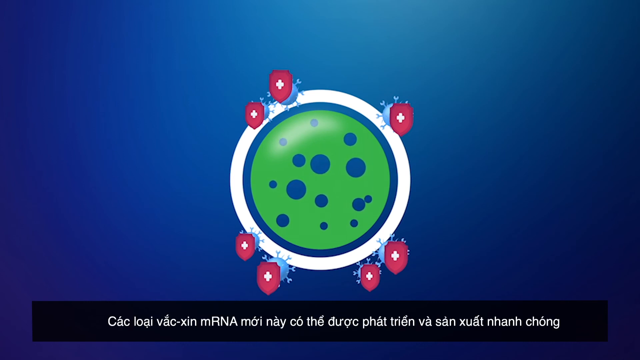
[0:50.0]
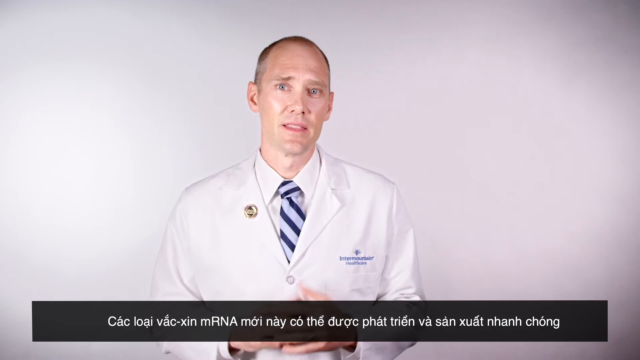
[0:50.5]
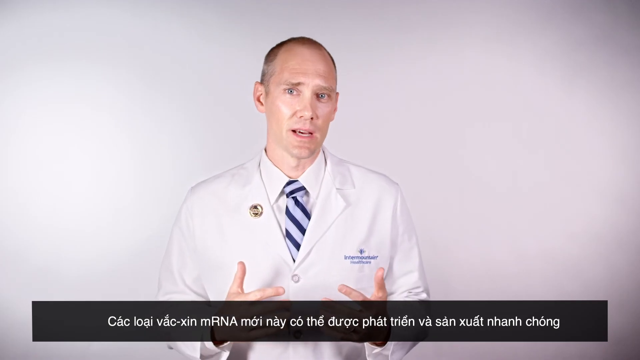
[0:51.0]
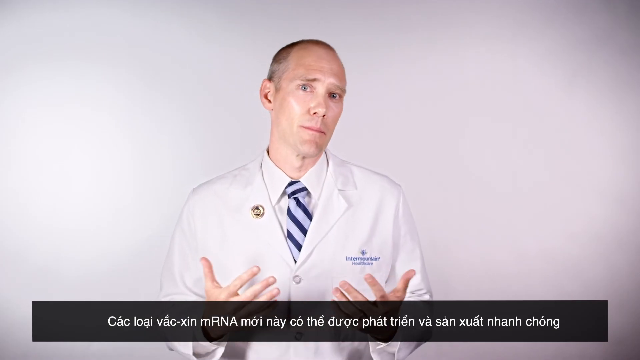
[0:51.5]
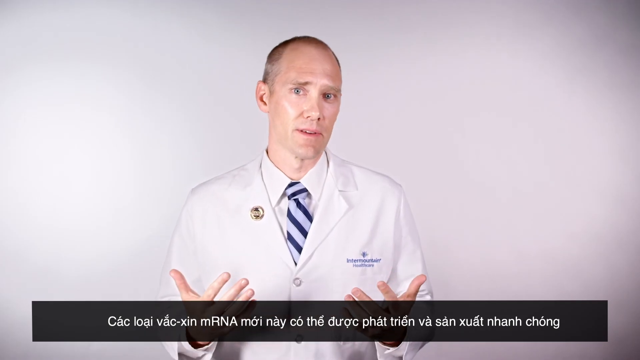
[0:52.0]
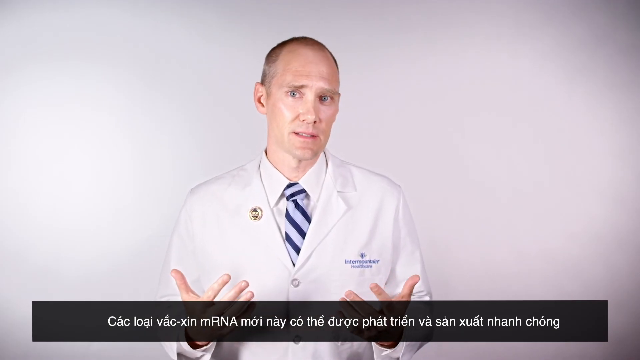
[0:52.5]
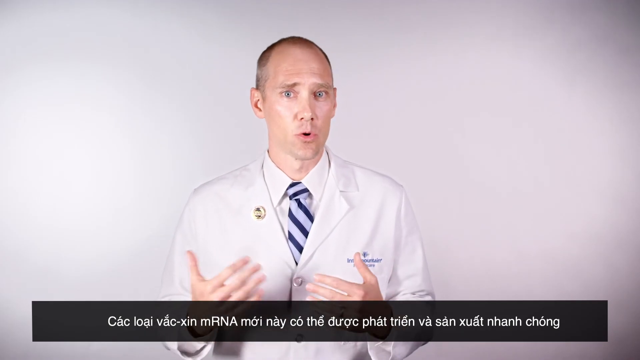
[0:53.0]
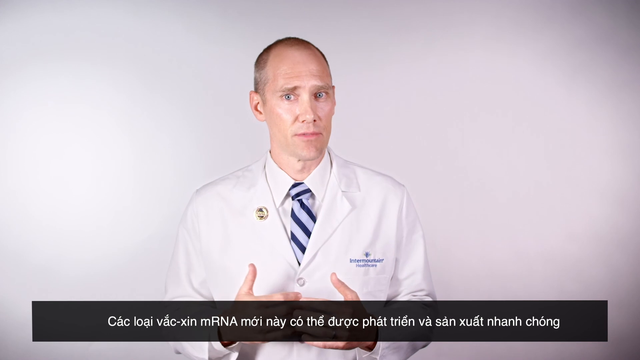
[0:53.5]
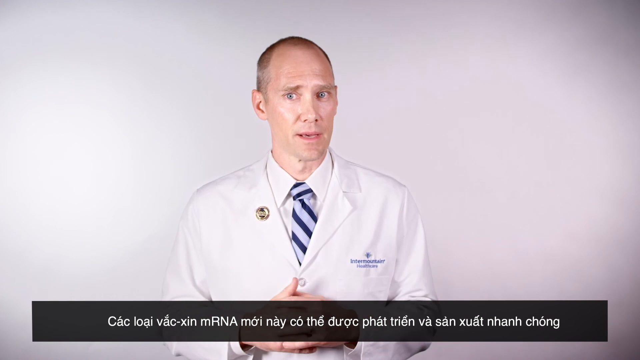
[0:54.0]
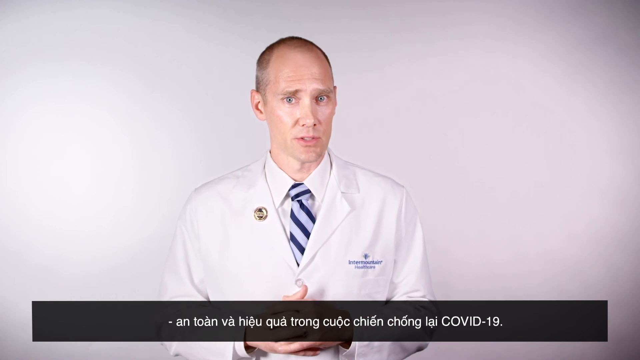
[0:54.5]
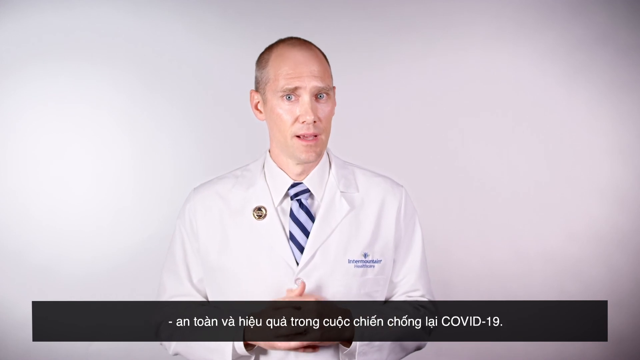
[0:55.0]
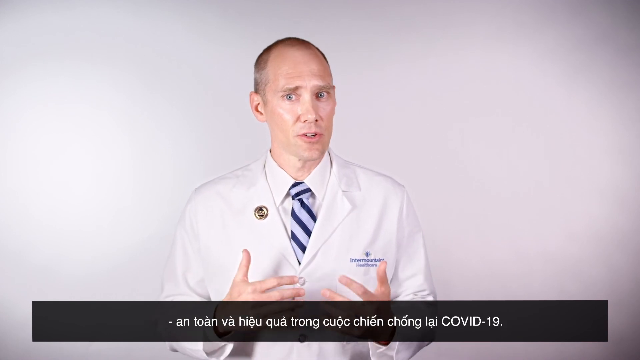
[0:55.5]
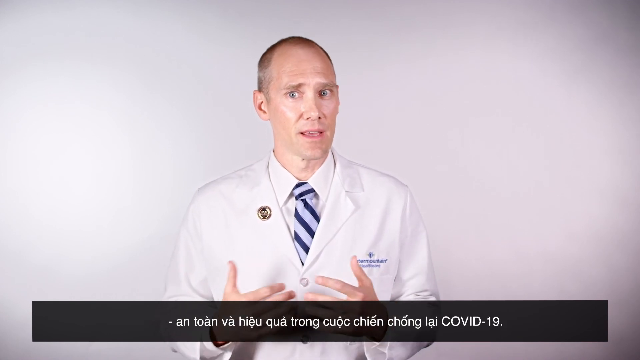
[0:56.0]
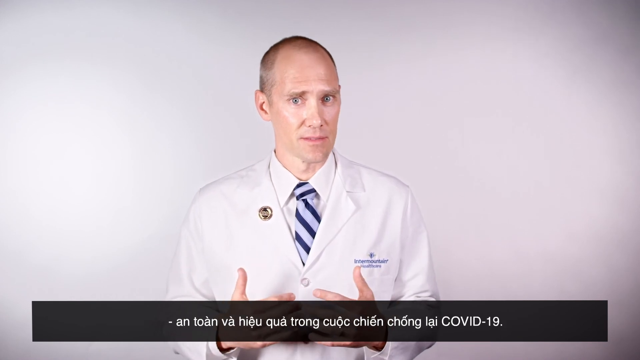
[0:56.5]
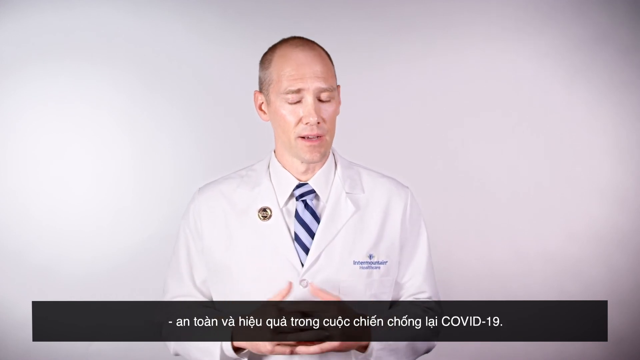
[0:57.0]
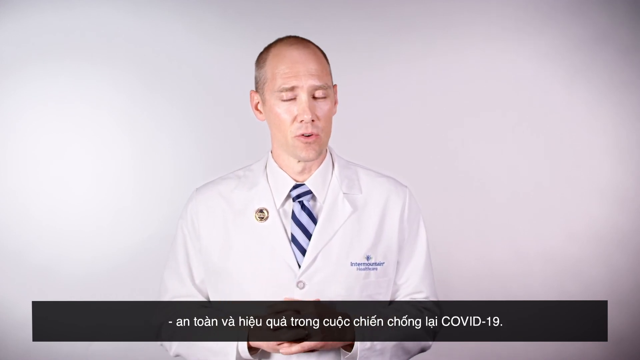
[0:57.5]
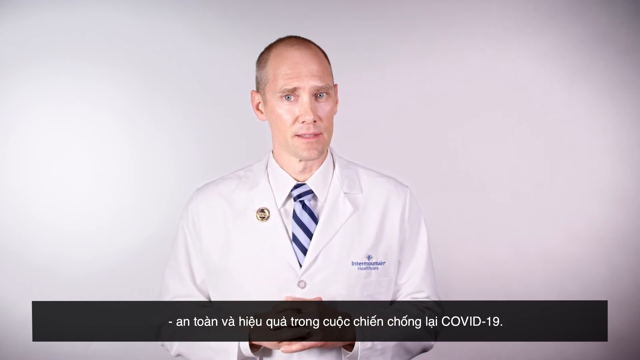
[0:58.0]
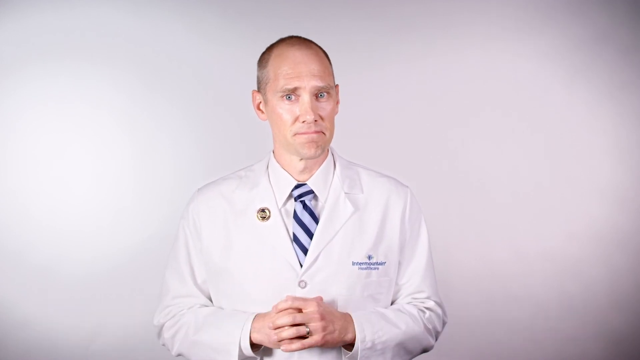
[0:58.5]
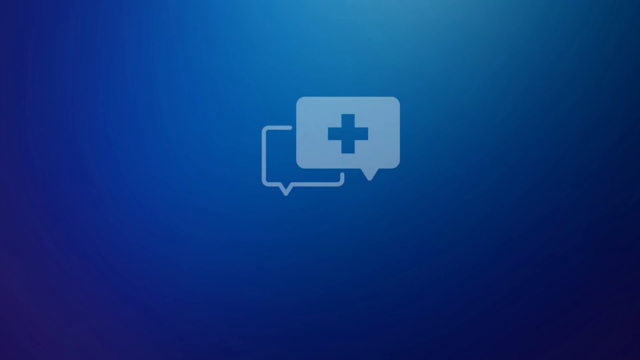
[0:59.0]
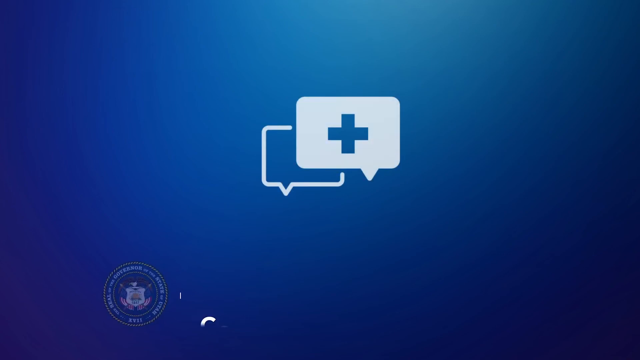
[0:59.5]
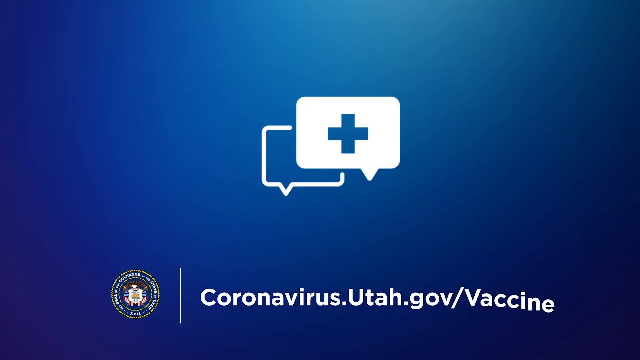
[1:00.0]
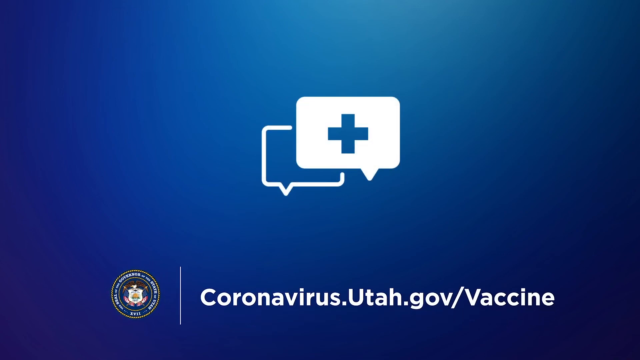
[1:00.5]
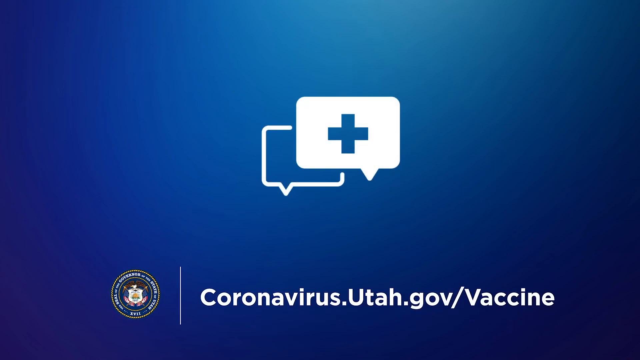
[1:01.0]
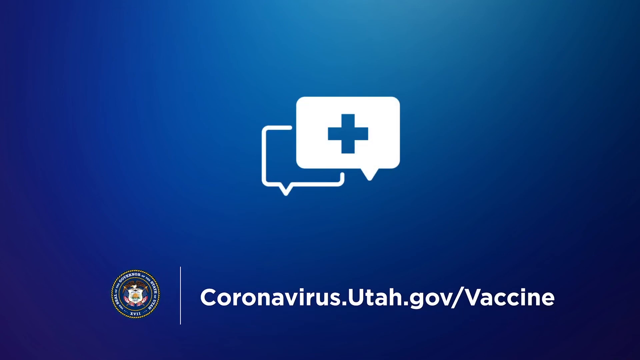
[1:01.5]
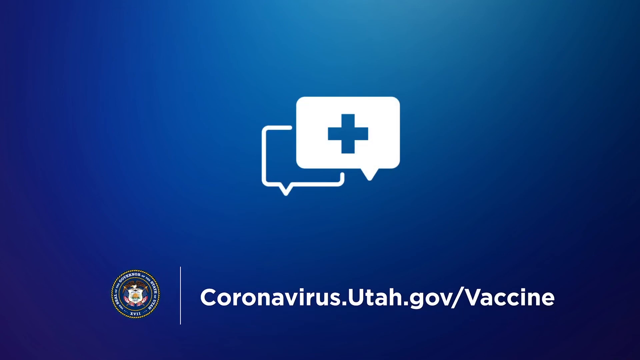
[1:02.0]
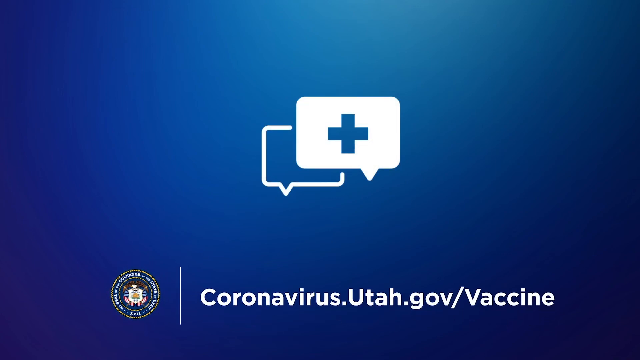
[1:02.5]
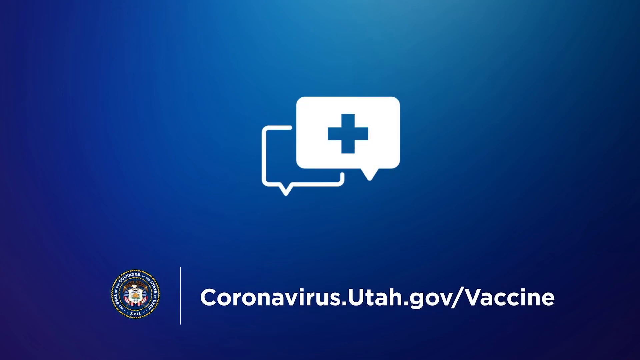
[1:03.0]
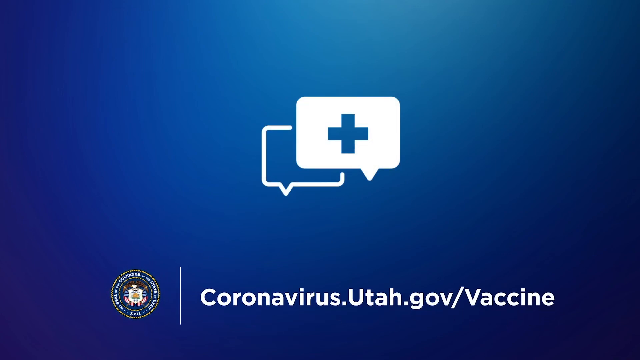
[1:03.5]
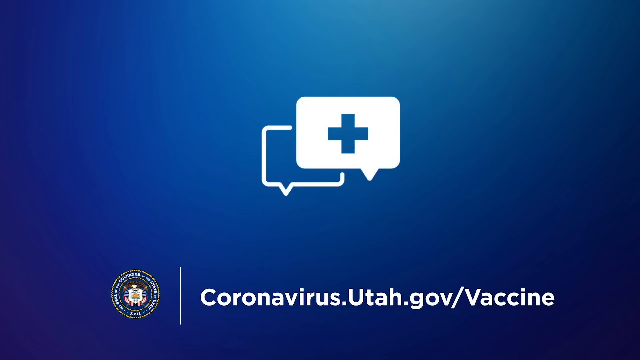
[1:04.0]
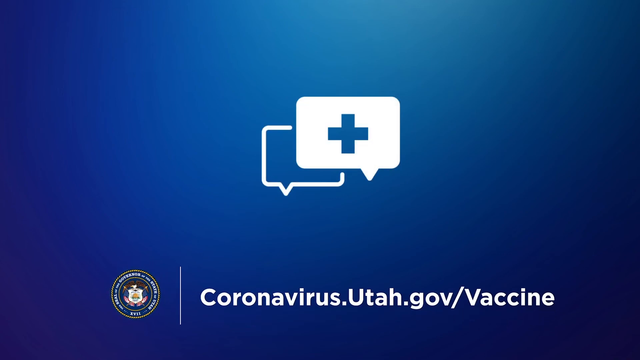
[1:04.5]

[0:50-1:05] On a blue background, a large dark green circle in the middle contains small dark blue spots of various sizes, and there seems to be a white border around it. Attached to this white border are small light blue bacteria-looking circles, each topped with an image of a small red shield with a white cross on the front. The screen changes to a white background with a man who is a doctor talking to the camera. He wears a white doctor's coat that says "Intermountain Healthcare" and a dark blue and light blue diagonal striped tie, and he has really short light brown hair, almost bald. He somewhat holds his hands in front of him, palms up with his fingers loosely spread, as he speaks, with a somewhat serious look on his face and big blue eyes open very wide. At the bottom of the screen, a black rectangular box holds text in Vietnamese. The screen then changes to a blue background with what looks like a square speech bubble icon that has only an outer white border. Overlapping it, up and to the right a little, is another square speech bubble, this one filled in all white with a small blue cross on the front. At the bottom of the screen is some kind of government-looking seal, and to its right the text reads "coronavirus.utah.gov/vaccine".